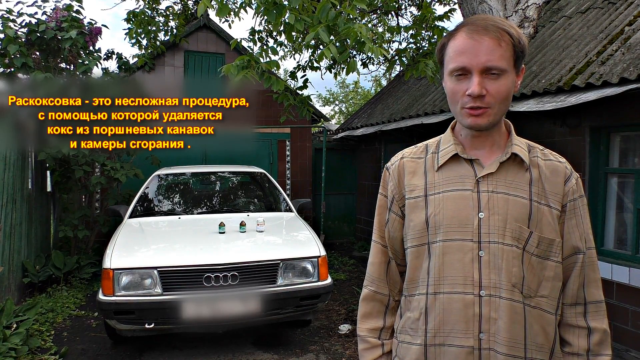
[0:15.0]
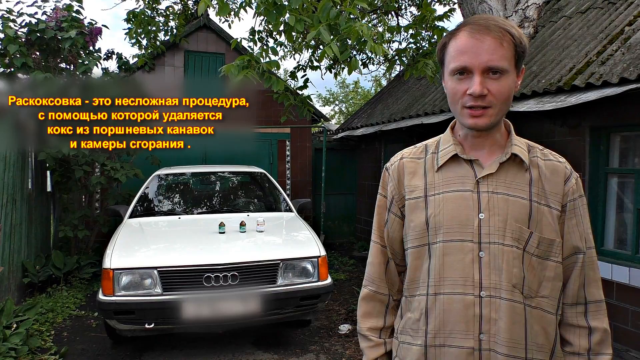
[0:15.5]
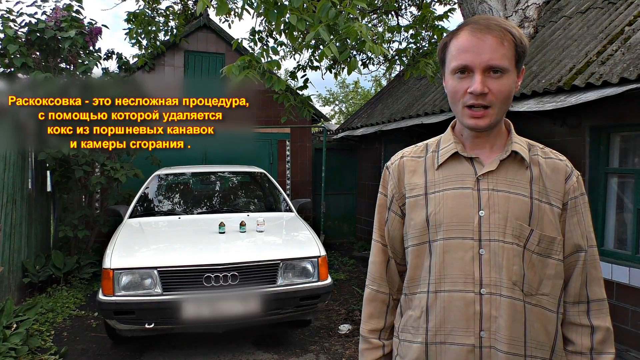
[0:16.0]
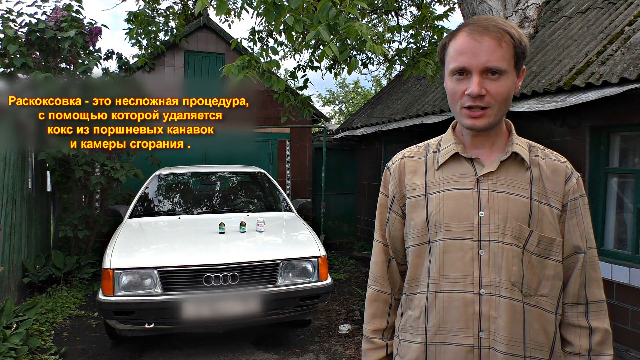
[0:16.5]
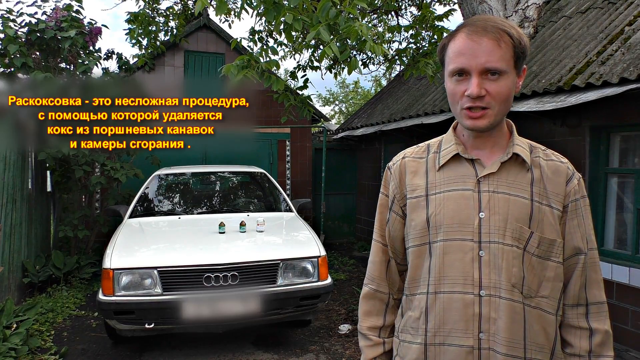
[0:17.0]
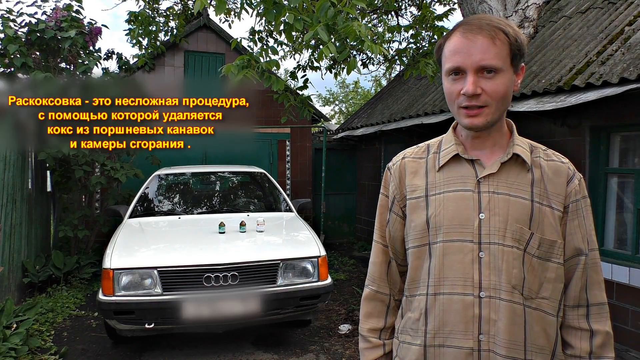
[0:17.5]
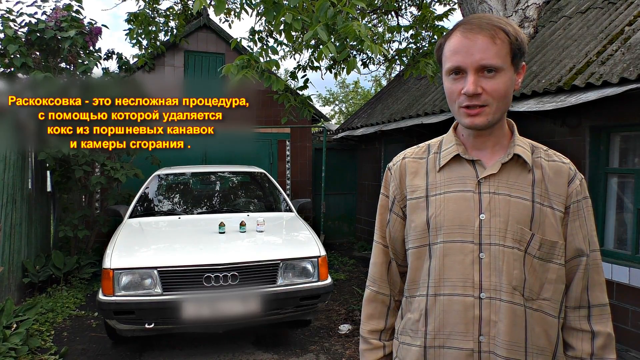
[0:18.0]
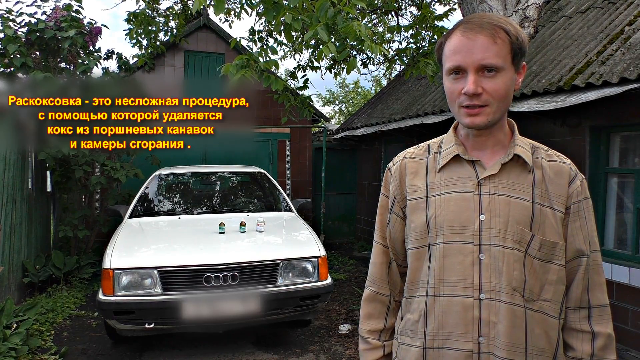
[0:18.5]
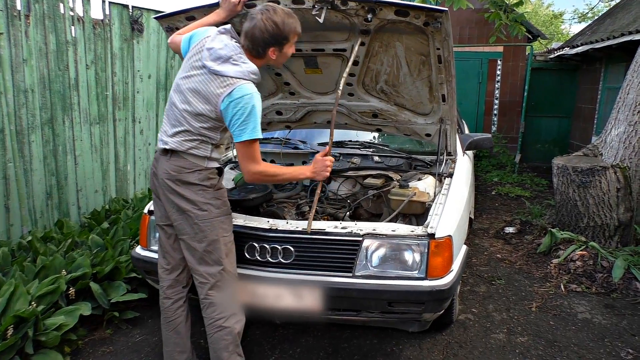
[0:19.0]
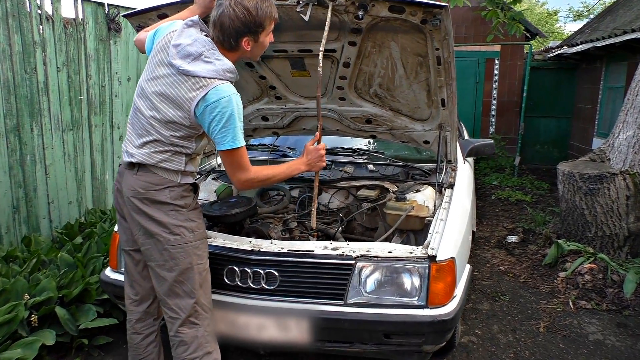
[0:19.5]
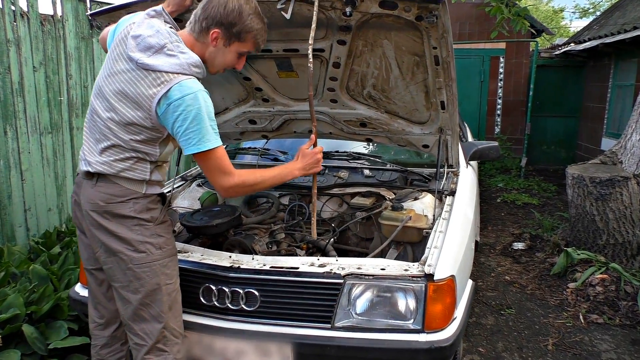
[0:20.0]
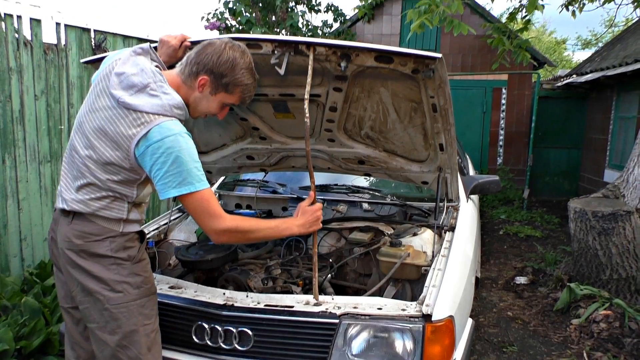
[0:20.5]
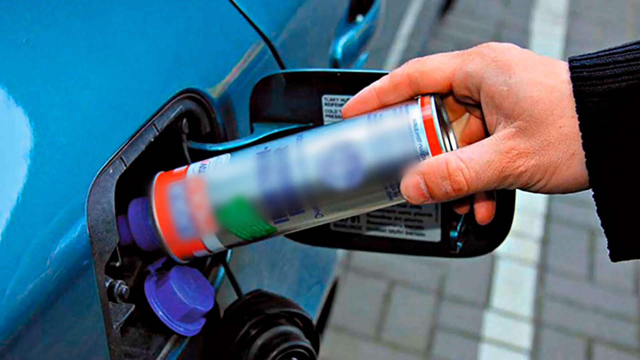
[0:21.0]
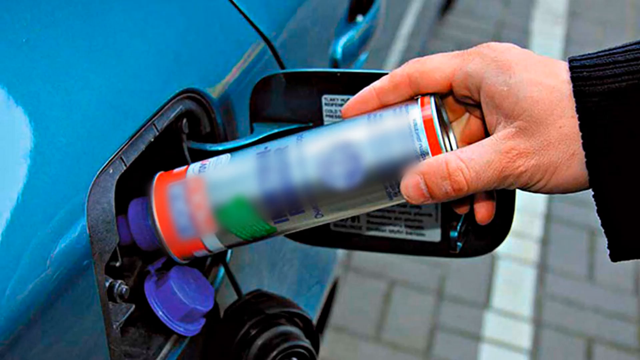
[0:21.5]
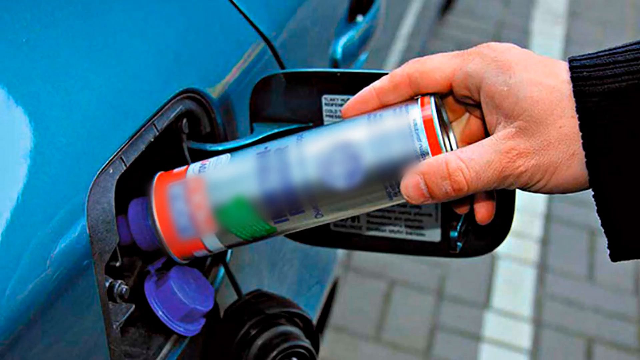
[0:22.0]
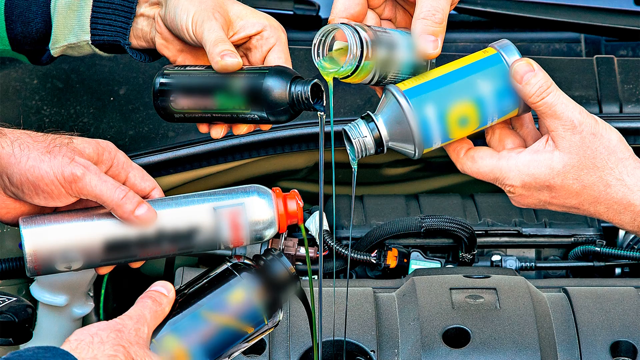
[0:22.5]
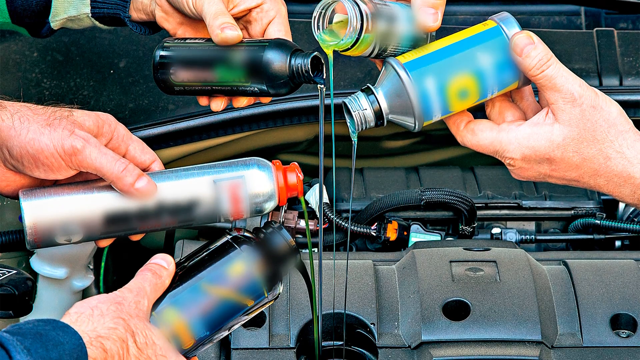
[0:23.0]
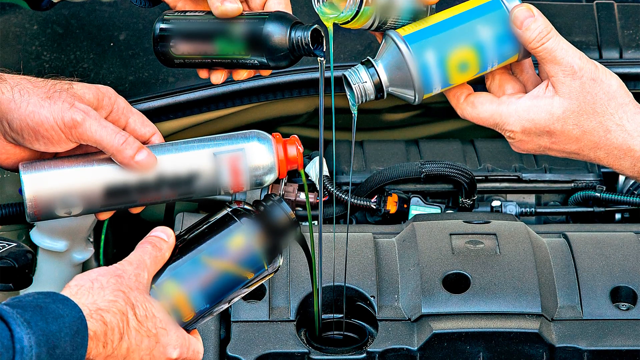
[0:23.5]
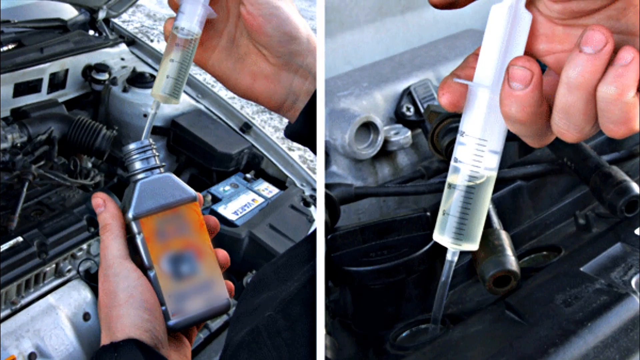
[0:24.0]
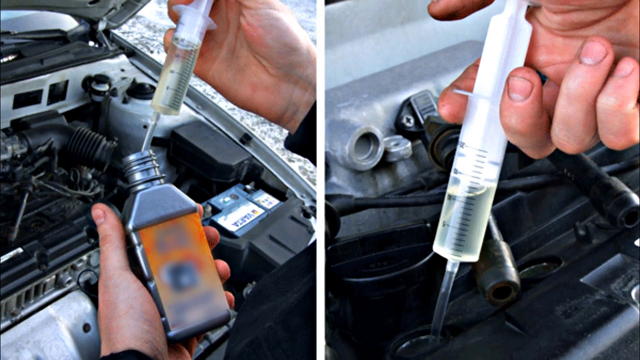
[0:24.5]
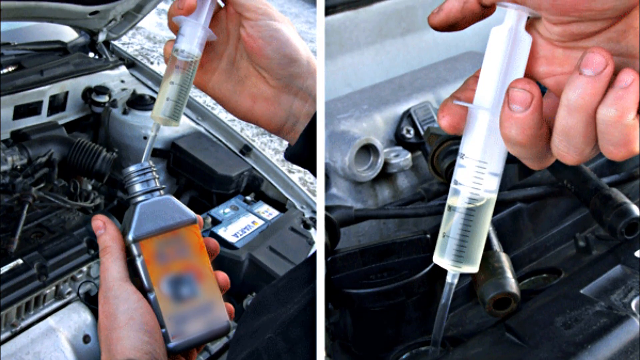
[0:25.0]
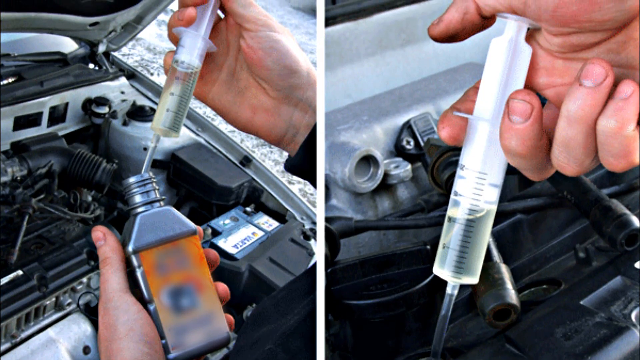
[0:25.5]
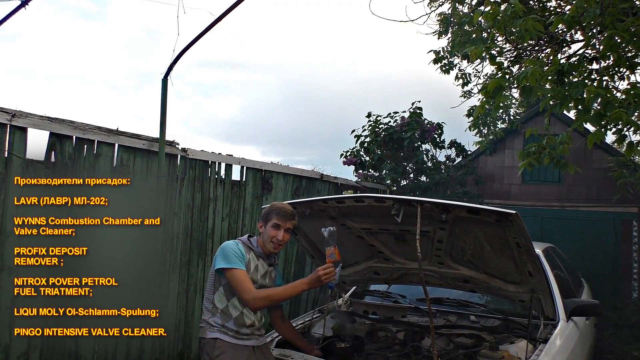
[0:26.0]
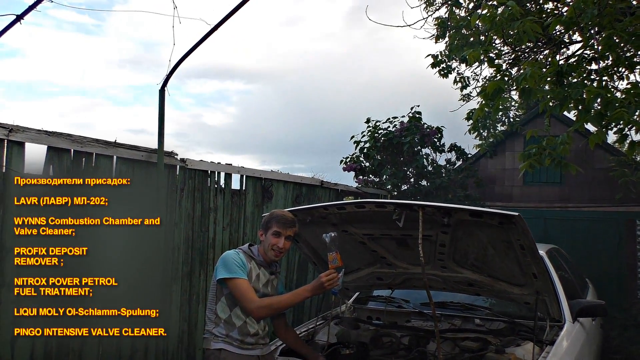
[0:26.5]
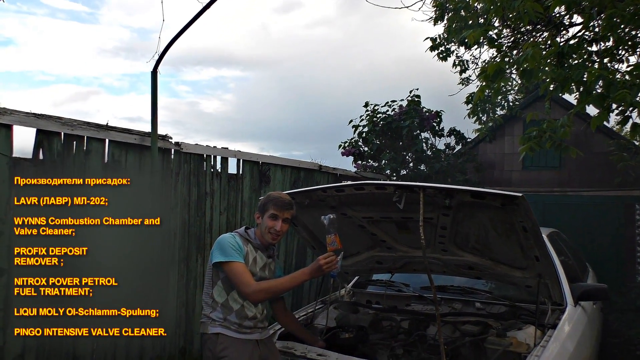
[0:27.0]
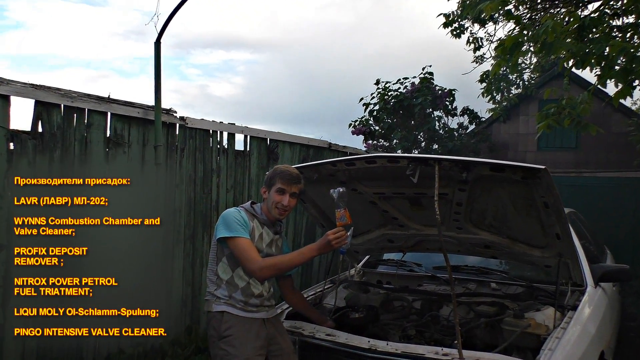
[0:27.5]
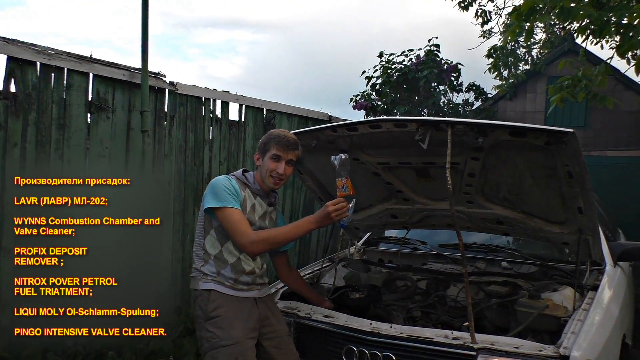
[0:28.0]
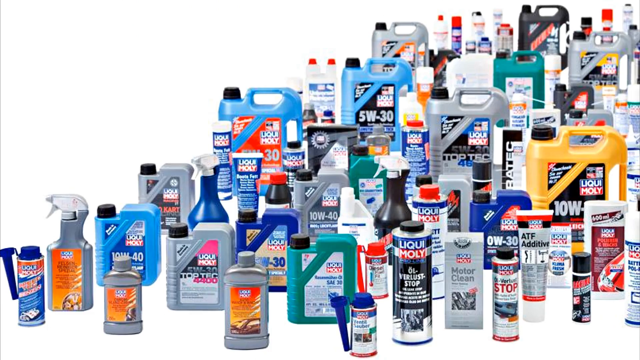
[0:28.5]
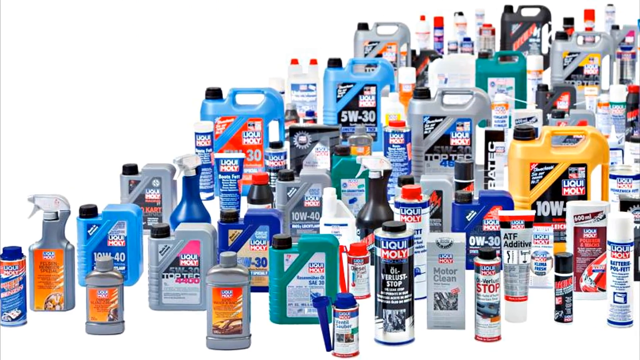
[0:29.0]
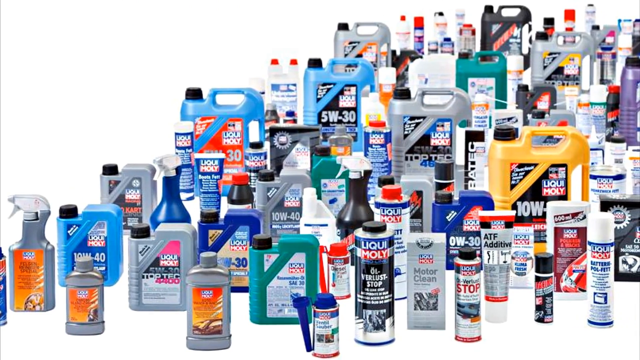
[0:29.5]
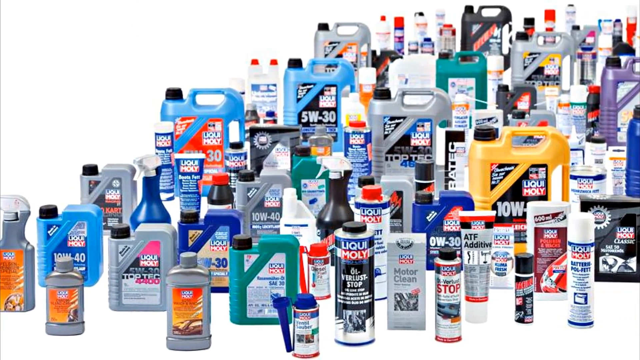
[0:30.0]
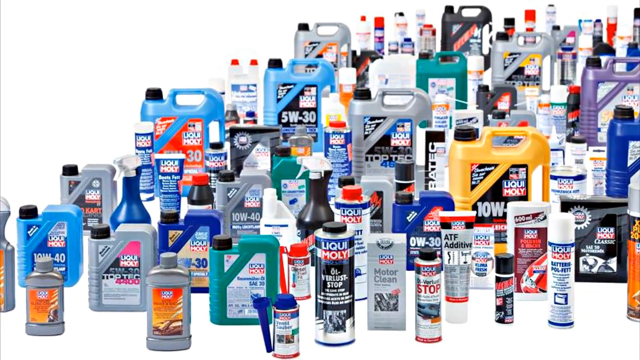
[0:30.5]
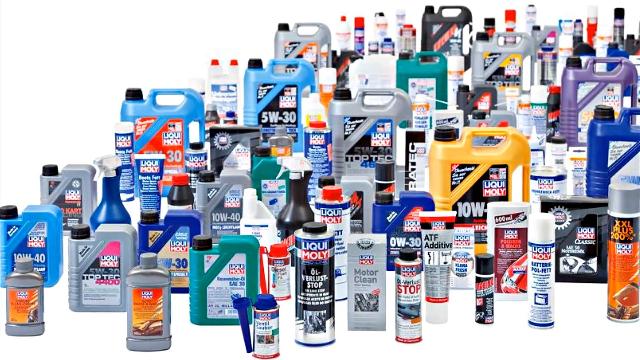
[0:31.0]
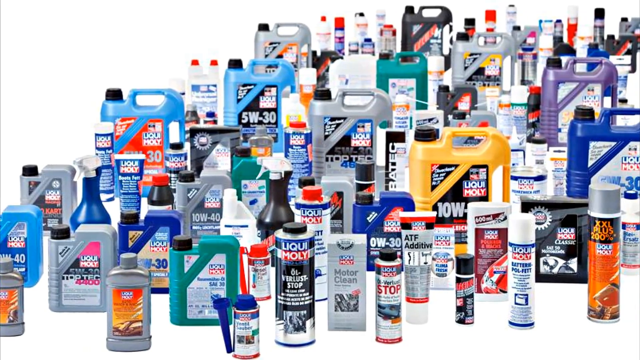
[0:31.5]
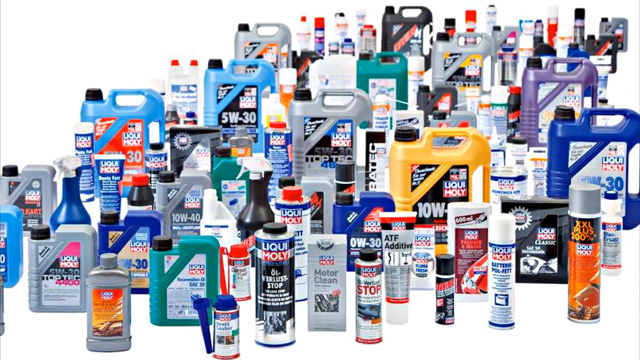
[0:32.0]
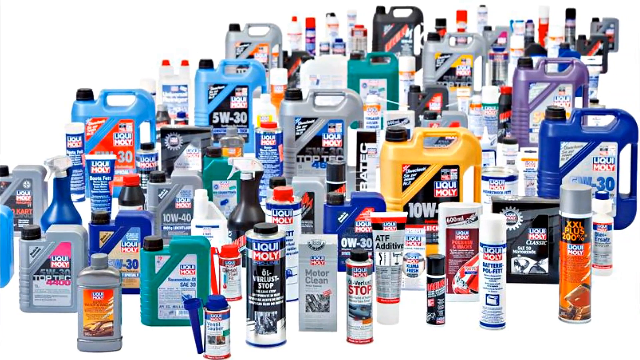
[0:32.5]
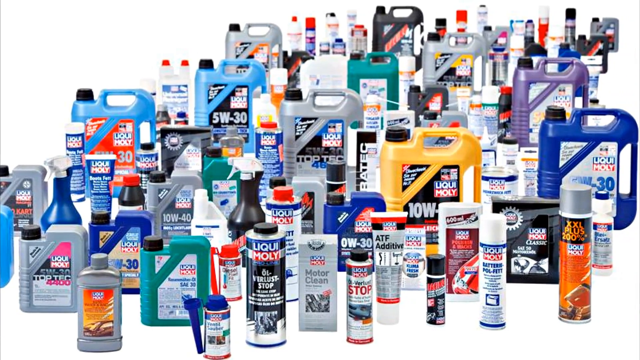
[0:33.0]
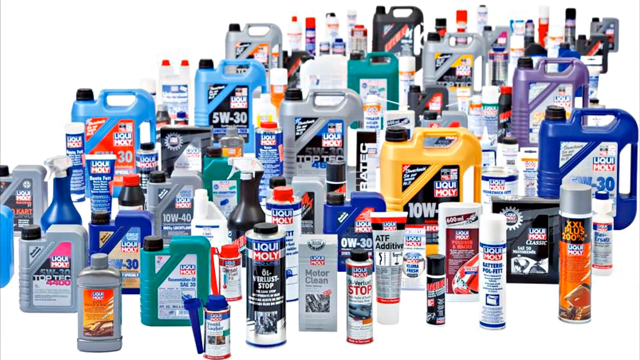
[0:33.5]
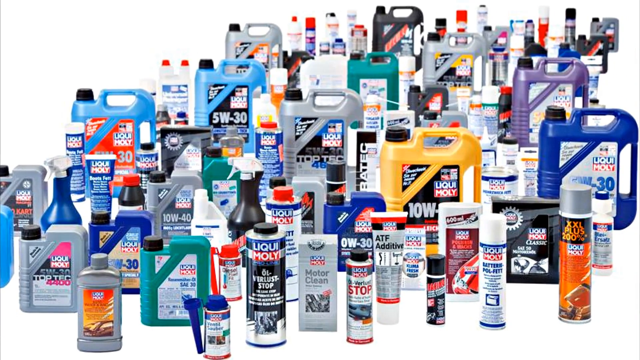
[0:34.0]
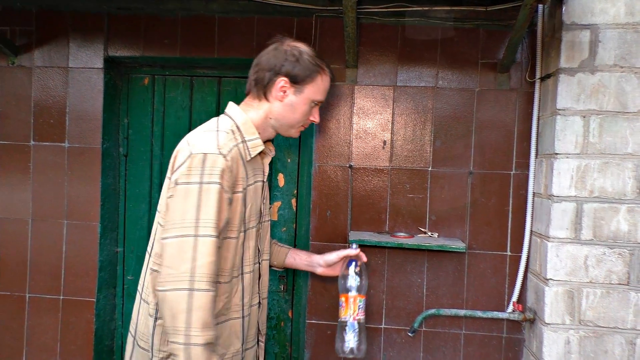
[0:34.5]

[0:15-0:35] A white car with its door open is shown, followed by a man in a brown shirt with black lines who faces the camera and talks to it. He says the procedure will also thoroughly rinse the valves, shown in closed captions at the bottom. He opens the hood and props it open with what almost looks like a stick. With the hood open, he pours something into the gas tank, and he is then shown with some other products that he pours into some part of the engine.